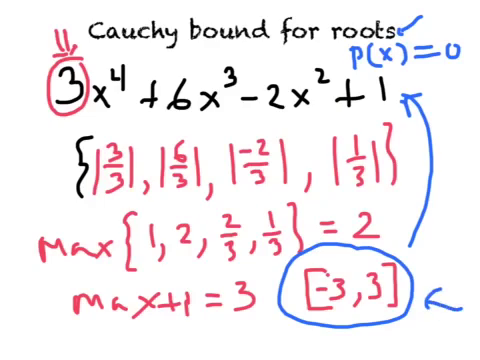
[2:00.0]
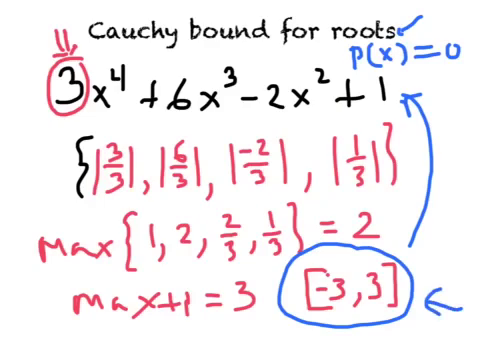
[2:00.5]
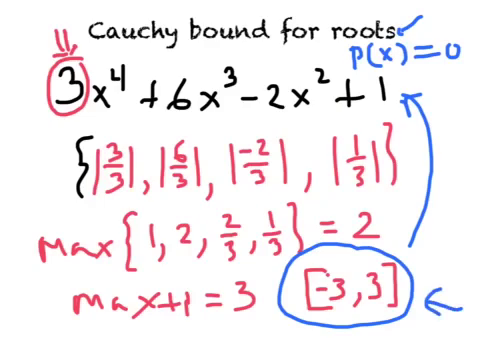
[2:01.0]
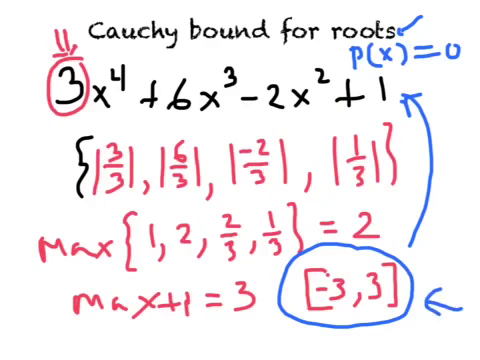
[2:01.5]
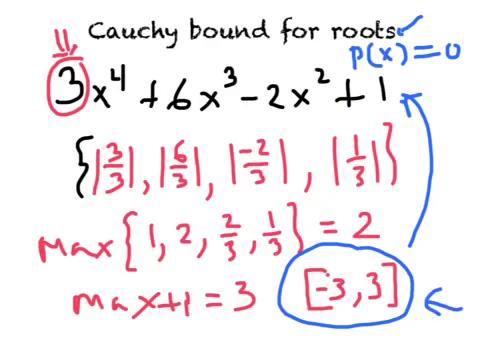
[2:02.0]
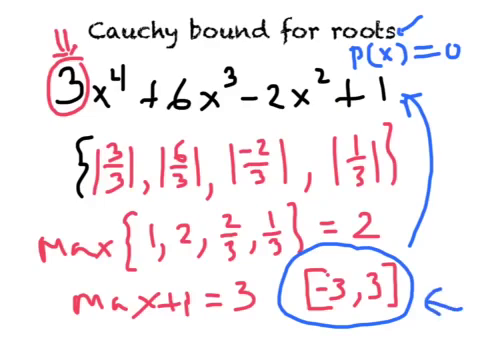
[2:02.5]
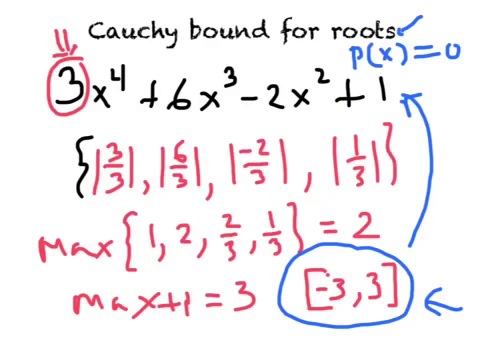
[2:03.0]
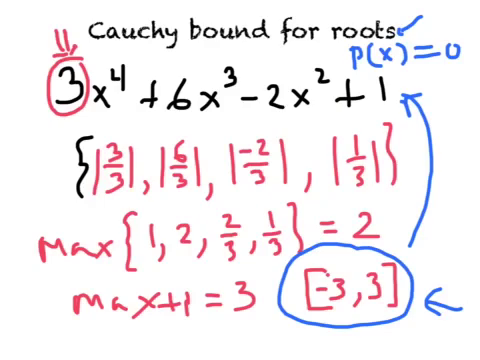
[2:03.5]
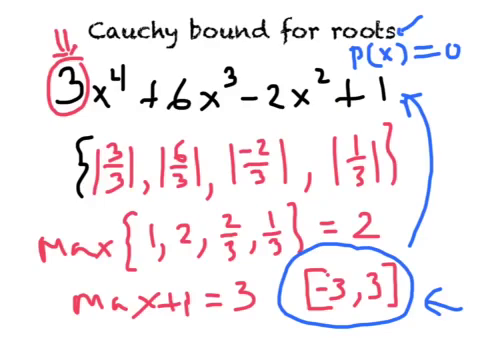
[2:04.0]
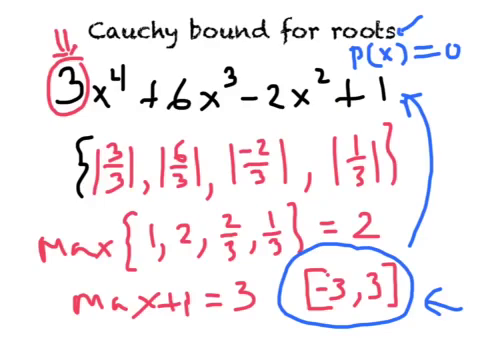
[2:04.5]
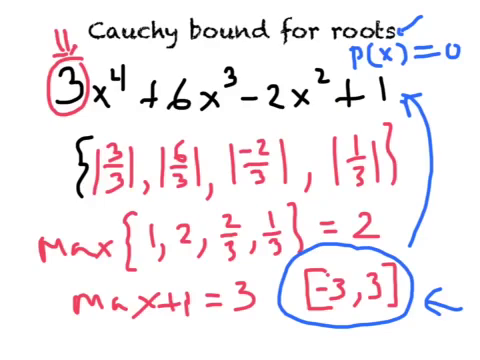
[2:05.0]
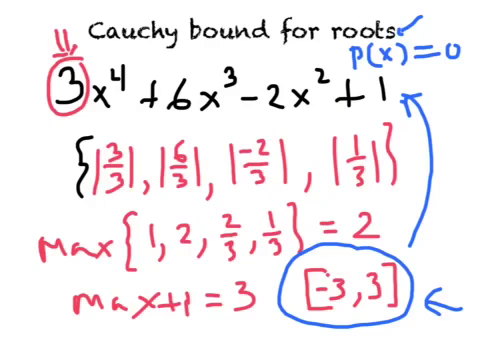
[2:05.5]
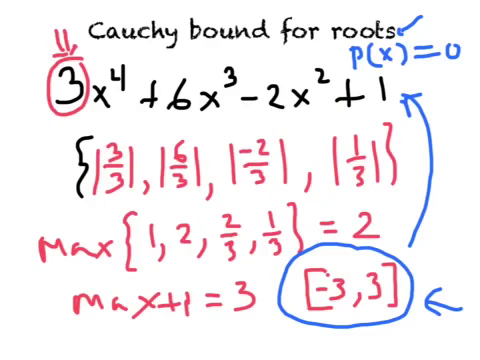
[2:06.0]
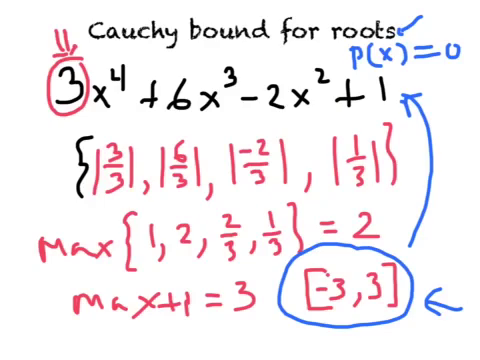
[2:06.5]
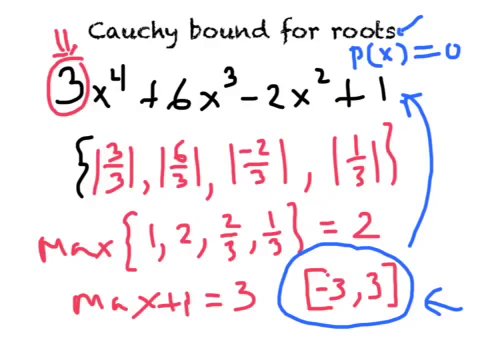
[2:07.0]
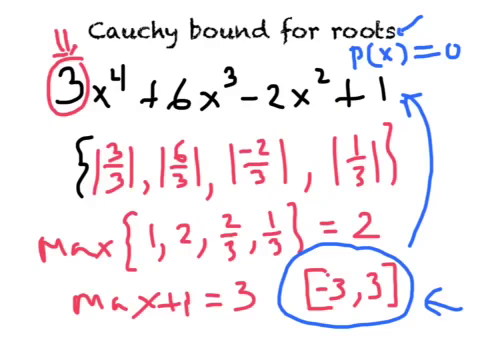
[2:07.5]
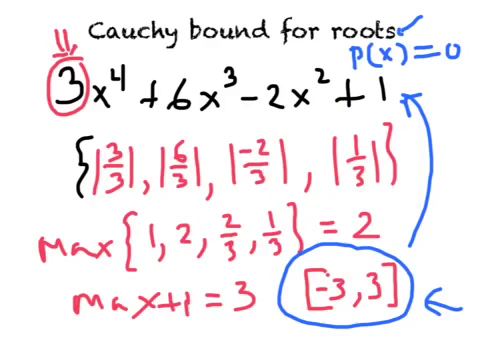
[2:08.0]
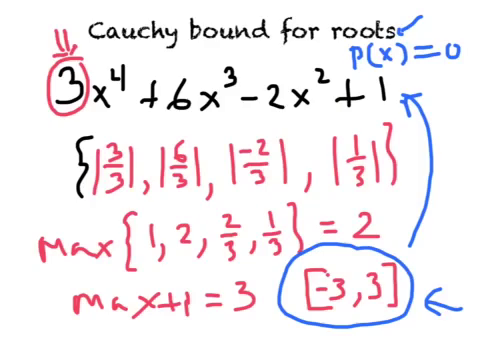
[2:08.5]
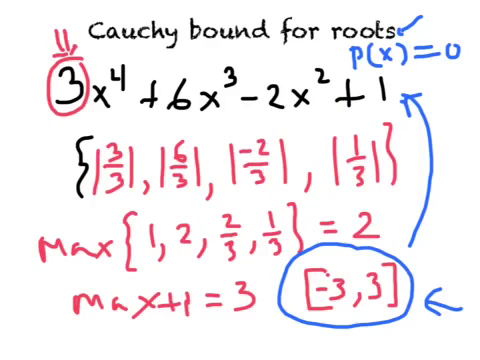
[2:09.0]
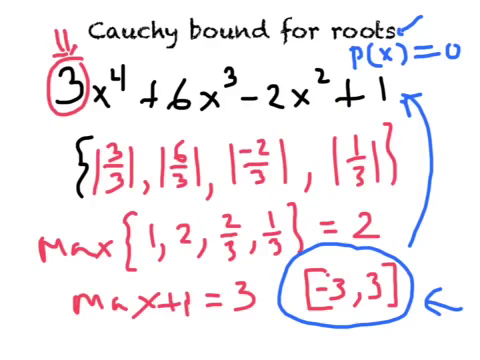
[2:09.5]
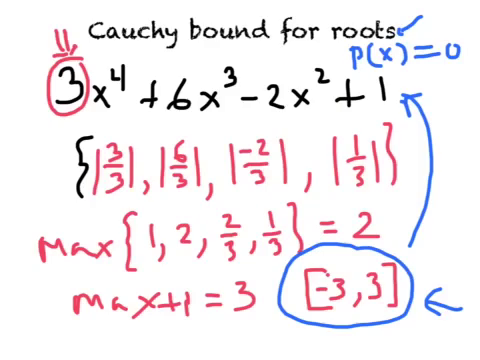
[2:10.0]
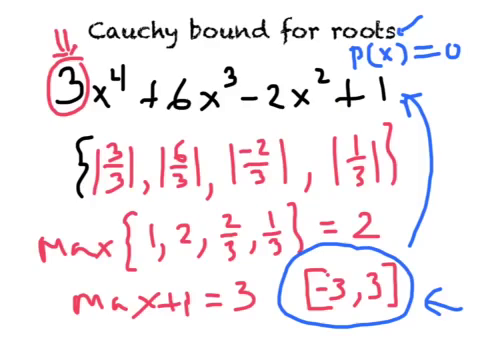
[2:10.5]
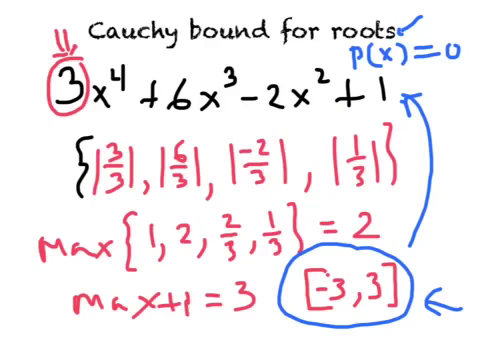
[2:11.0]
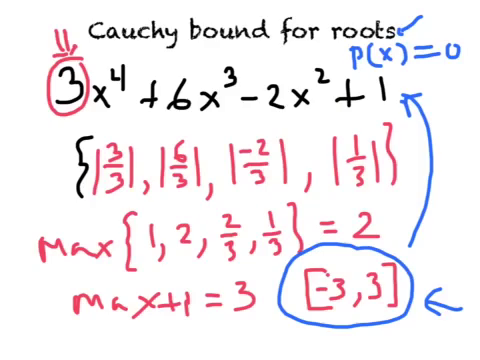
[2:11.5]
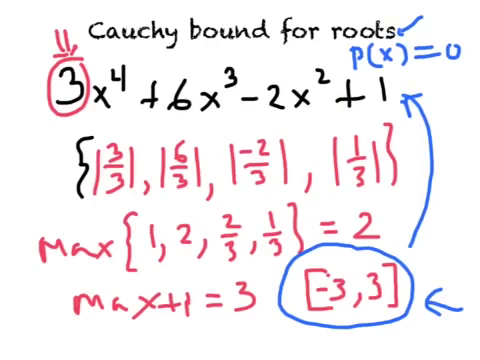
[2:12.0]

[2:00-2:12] The writing on the page is mostly completed, and little or nothing new is added. The page shows the title "Cauchy bound for roots", the formula on line two, curly braces with absolute values on line three, the max lines on lines four and five, and the bracketed −3, 3 on line five with its blue circle and arrows pointing toward line two with P(x) = 0. There is also an arrow pointing at the circle on line five. There is little animation or motion of writing in this part.